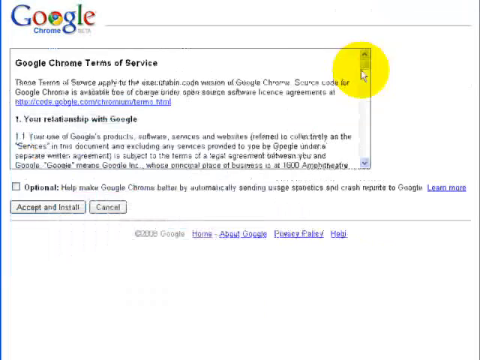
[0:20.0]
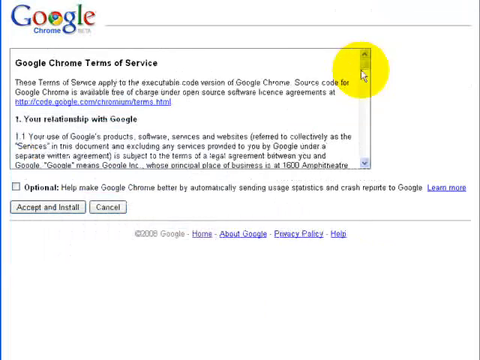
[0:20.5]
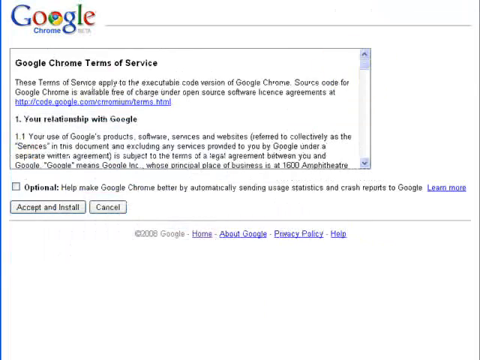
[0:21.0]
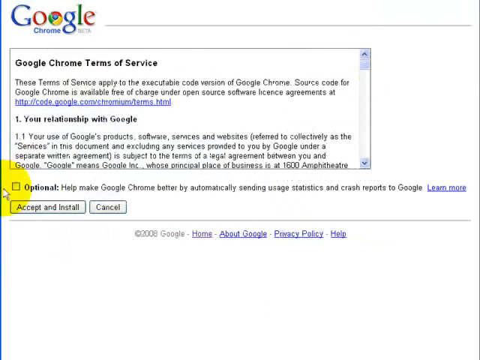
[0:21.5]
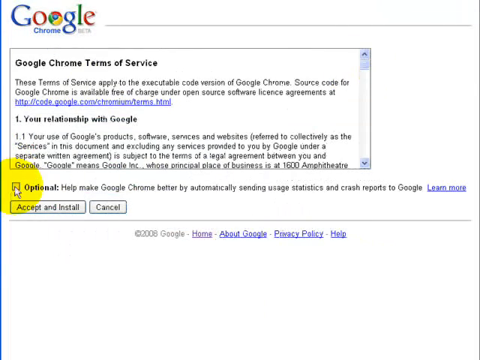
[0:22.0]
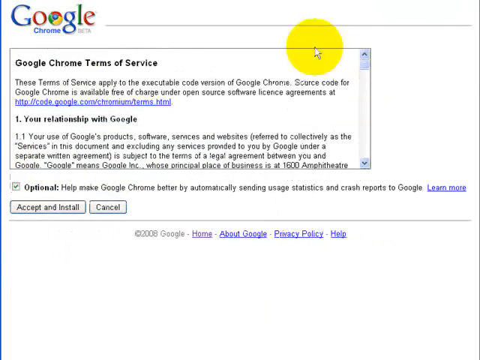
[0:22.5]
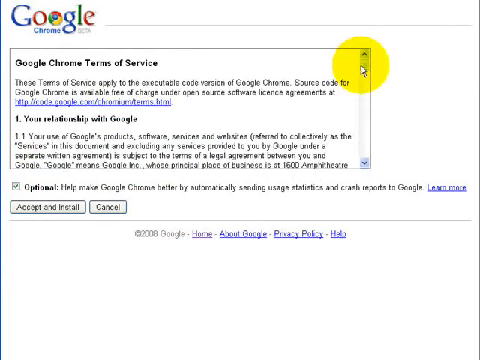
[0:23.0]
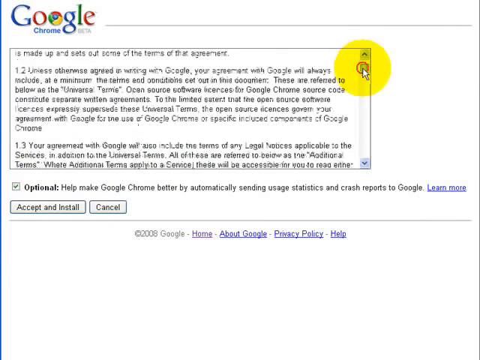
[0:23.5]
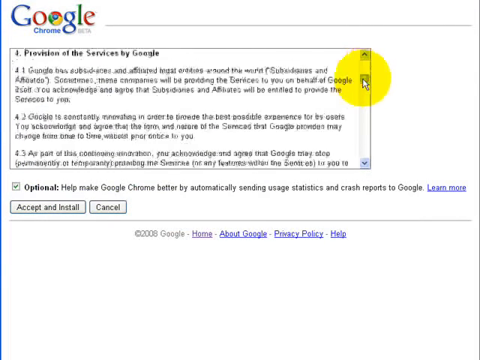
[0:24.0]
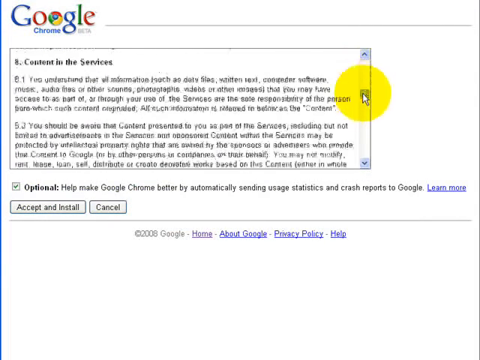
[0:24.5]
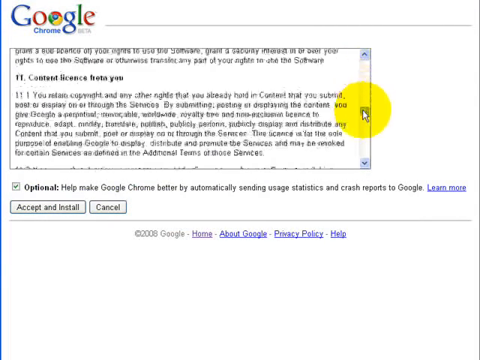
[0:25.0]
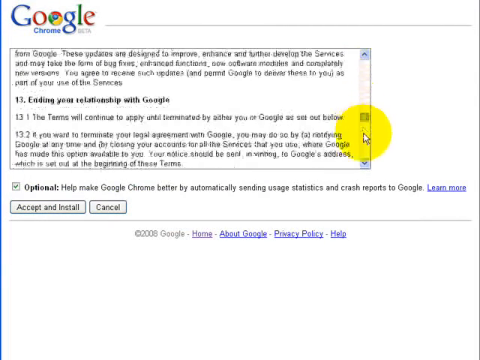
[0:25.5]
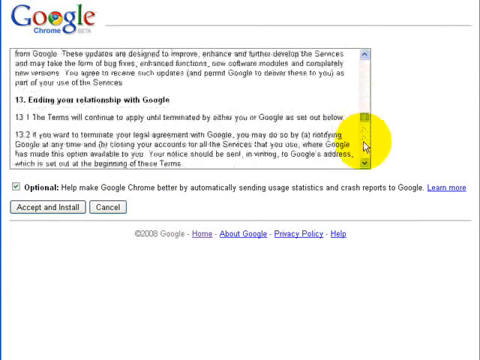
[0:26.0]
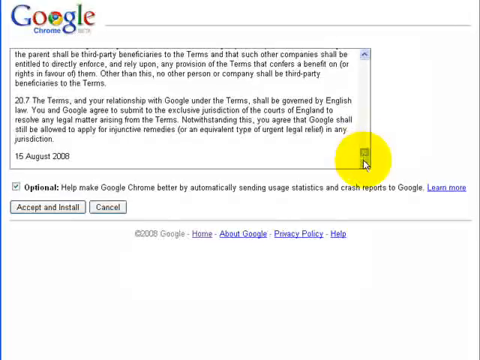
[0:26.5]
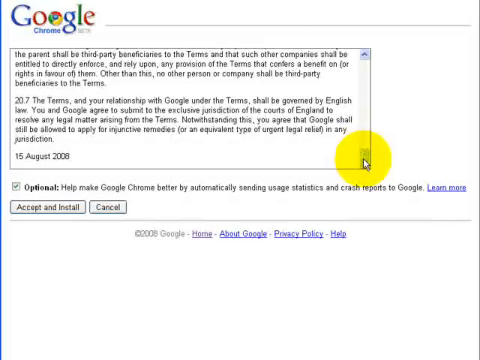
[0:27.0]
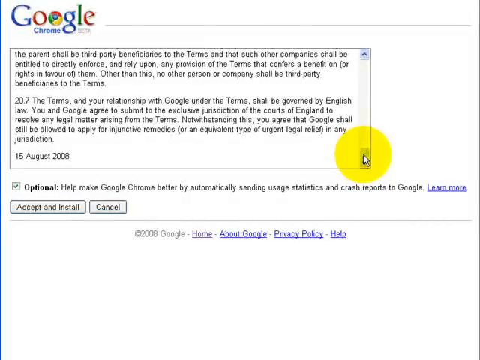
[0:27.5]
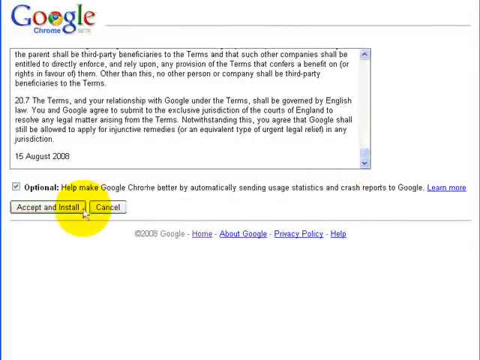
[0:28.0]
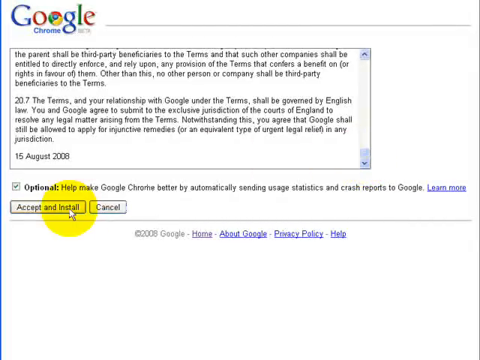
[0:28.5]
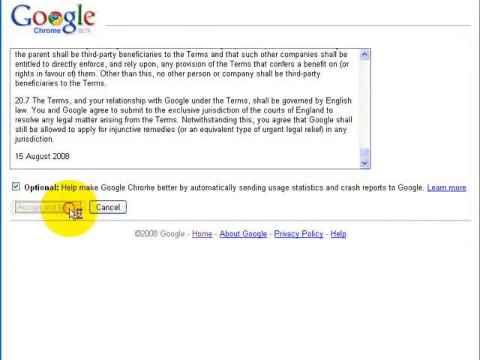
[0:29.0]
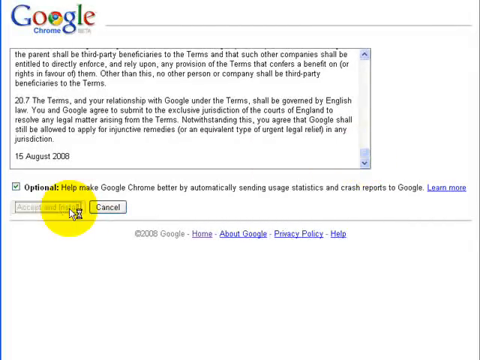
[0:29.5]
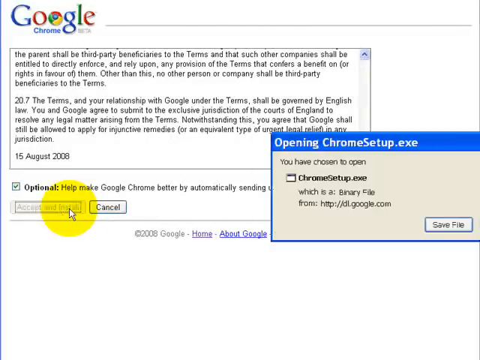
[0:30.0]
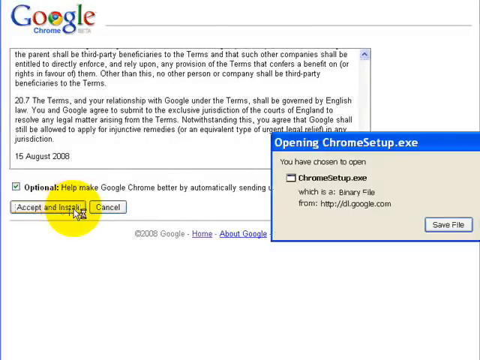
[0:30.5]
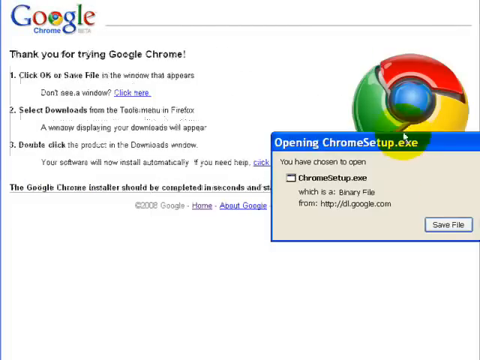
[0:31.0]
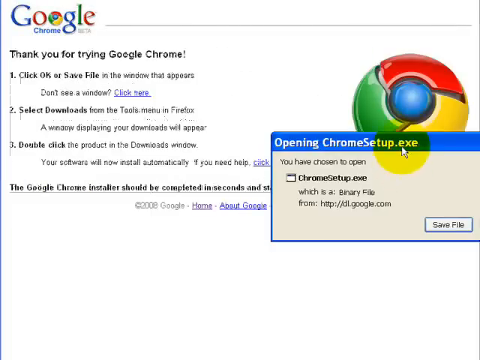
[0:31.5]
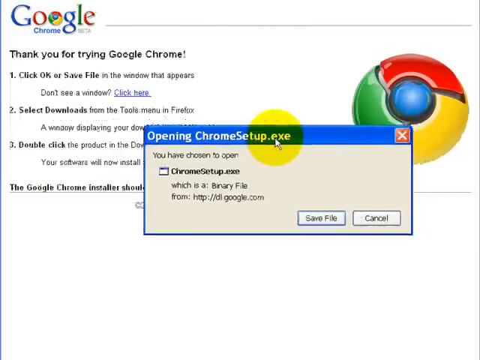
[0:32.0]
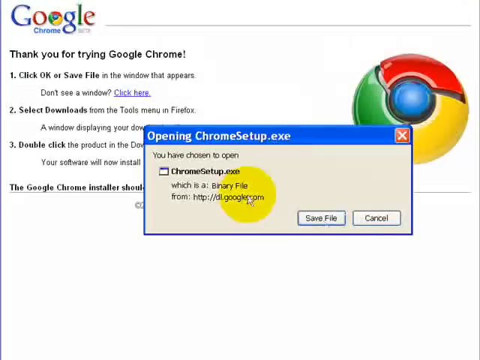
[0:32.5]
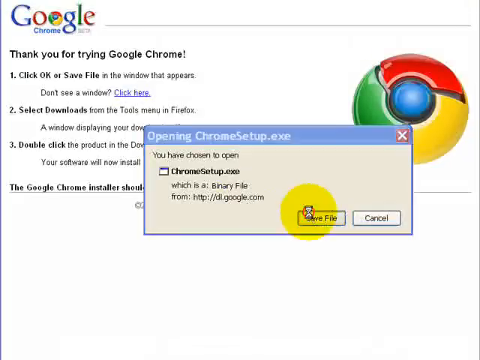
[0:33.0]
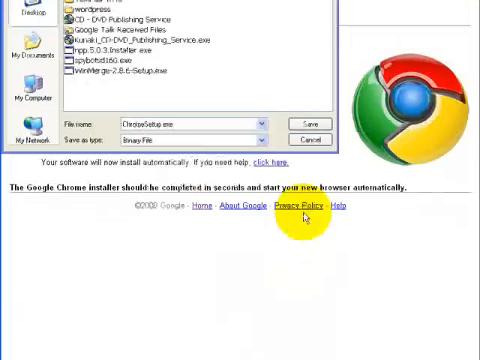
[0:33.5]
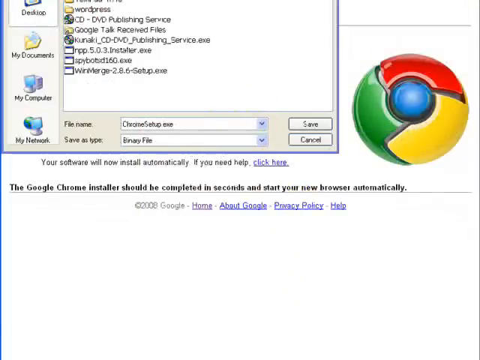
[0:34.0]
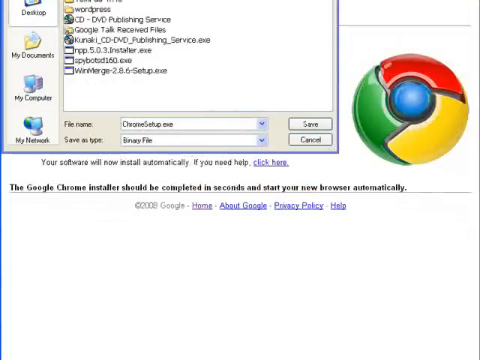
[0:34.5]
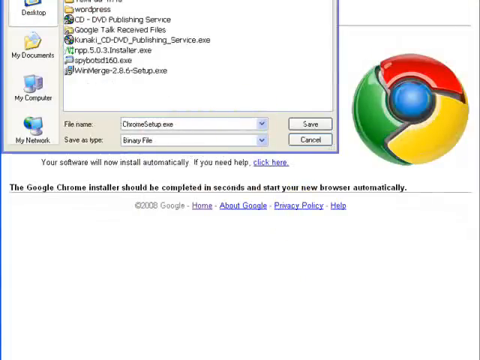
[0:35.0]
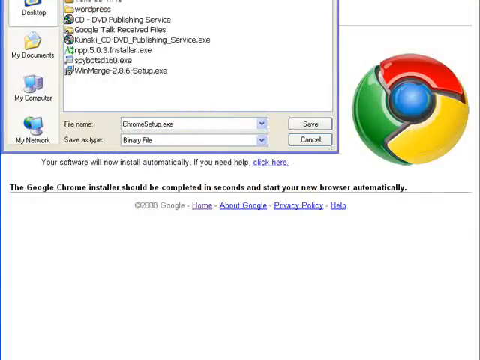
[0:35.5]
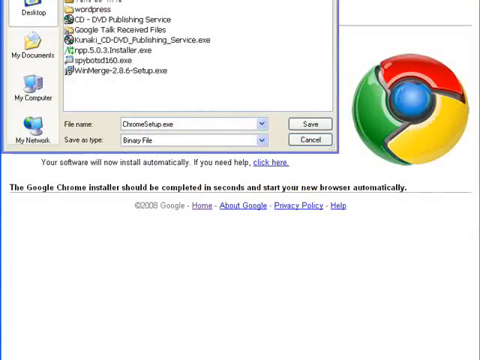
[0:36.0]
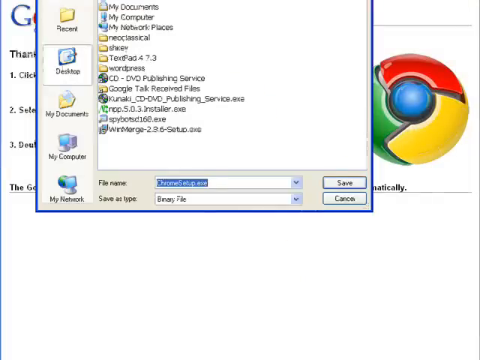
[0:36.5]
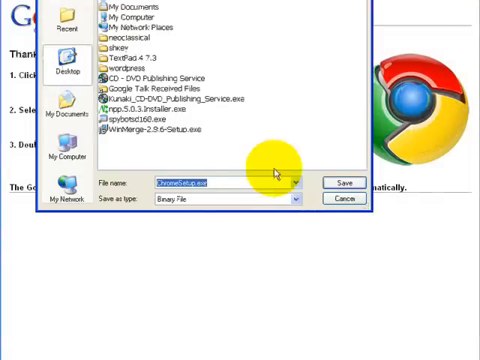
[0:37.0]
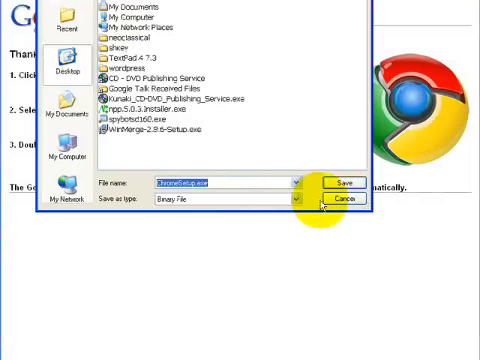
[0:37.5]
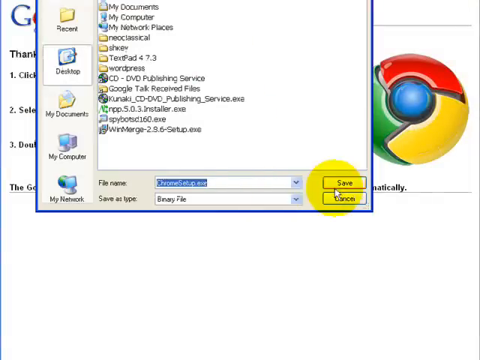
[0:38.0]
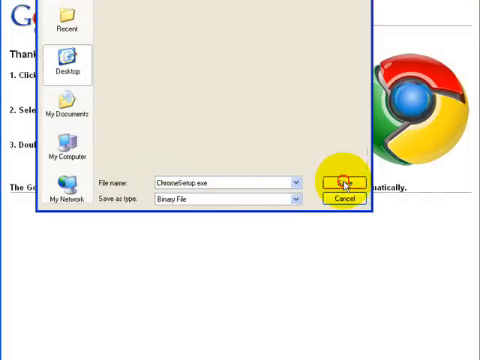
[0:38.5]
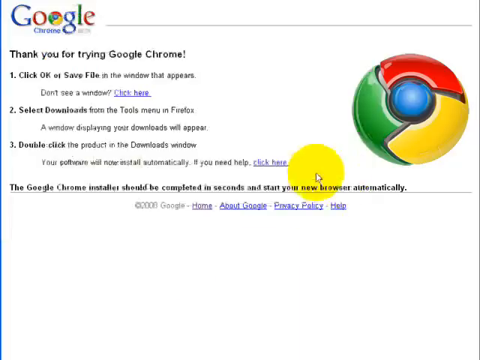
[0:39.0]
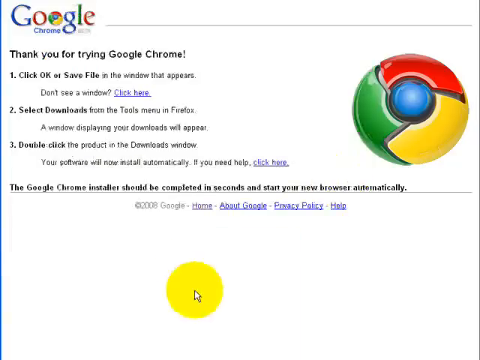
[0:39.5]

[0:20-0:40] After the download button is clicked, the Google Chrome Terms of Service page appears, with the terms in the middle of the page. The mouse pointer, surrounded by a large yellow circle that makes it highly visible, is in the upper right of the screen. It moves down to the lower left and clicks the checkbox next to "optional," then drags the scroll bar button down the entire length of the user agreement. The person clicks the "accept and install" button and then the "save file" button, saving the file to the desktop. The Chrome setup exe is now on the computer.